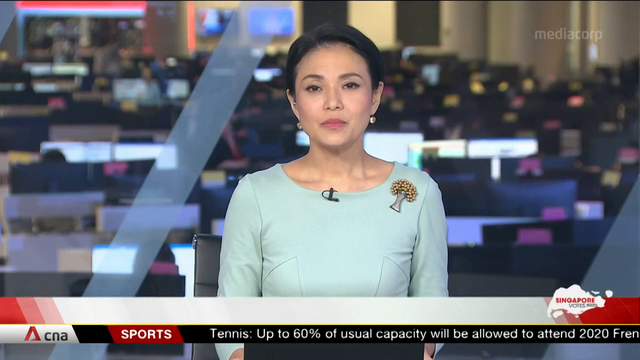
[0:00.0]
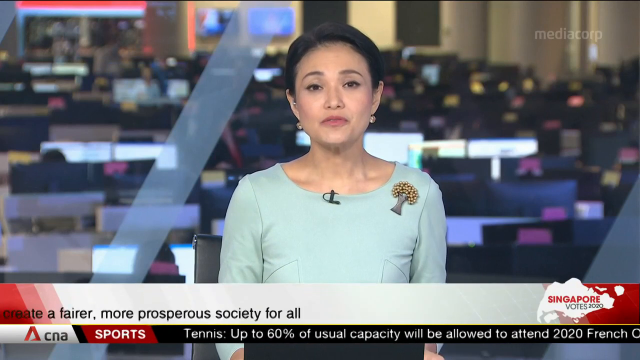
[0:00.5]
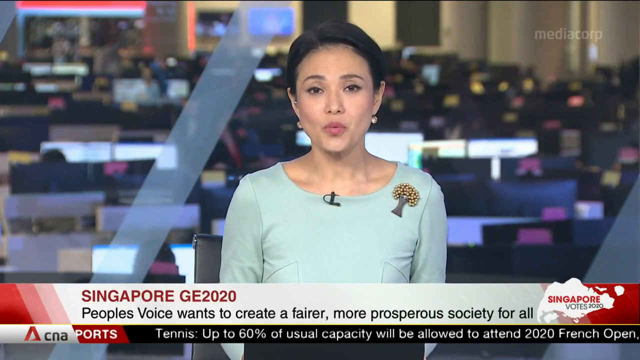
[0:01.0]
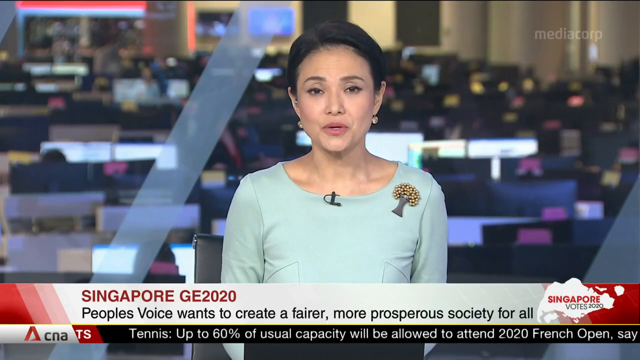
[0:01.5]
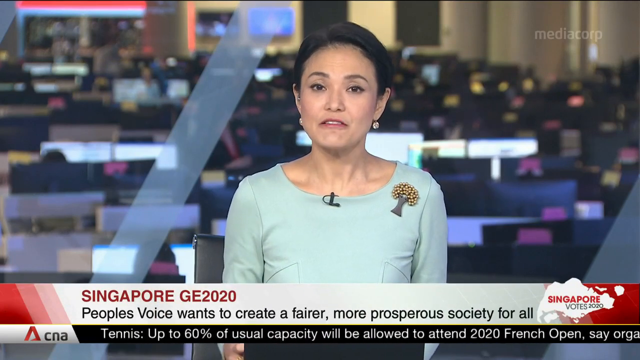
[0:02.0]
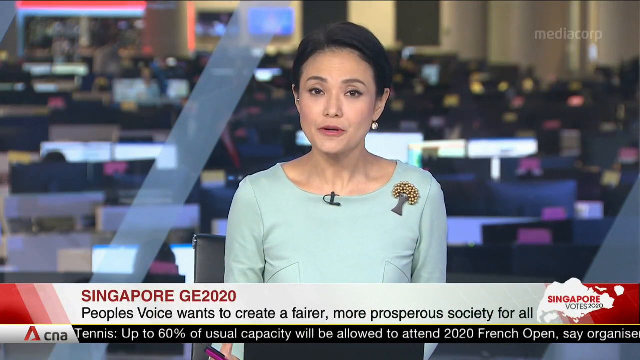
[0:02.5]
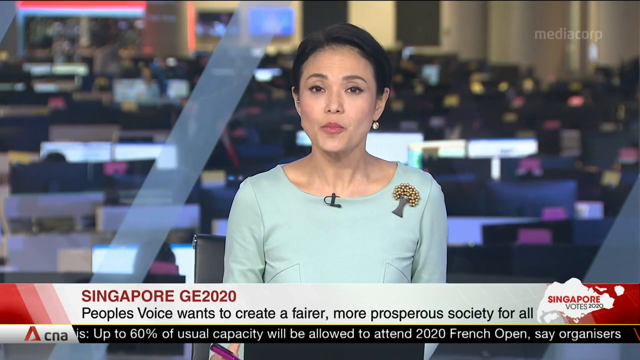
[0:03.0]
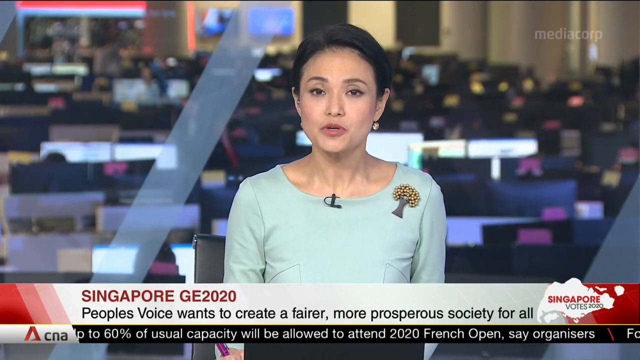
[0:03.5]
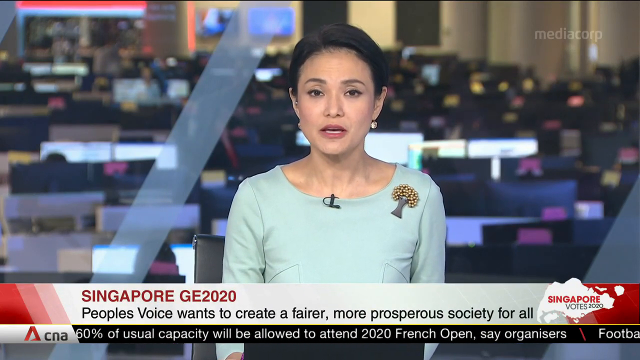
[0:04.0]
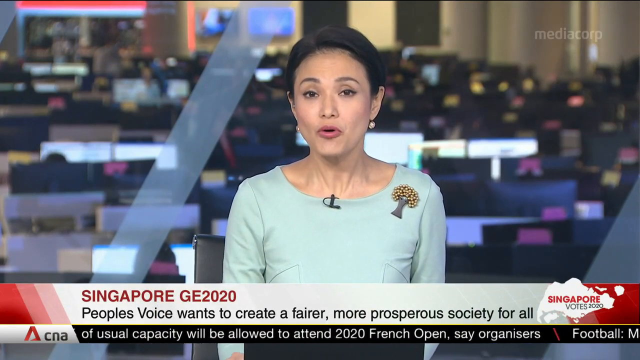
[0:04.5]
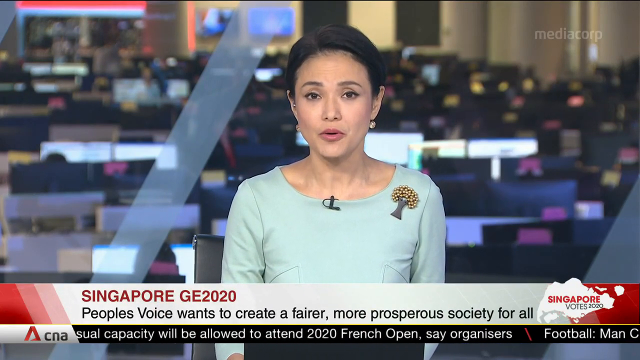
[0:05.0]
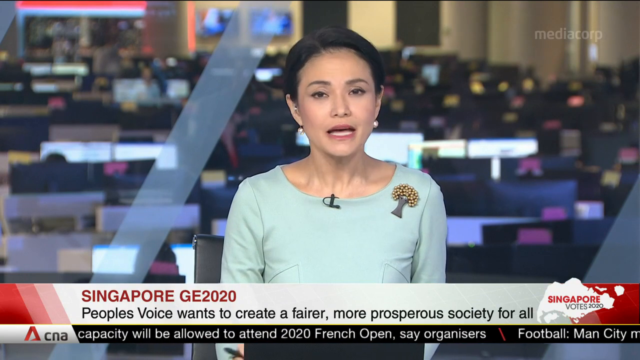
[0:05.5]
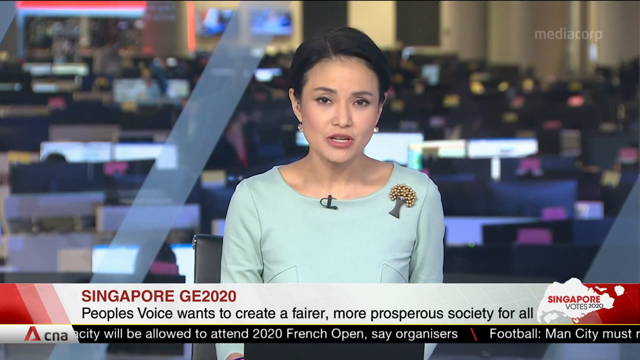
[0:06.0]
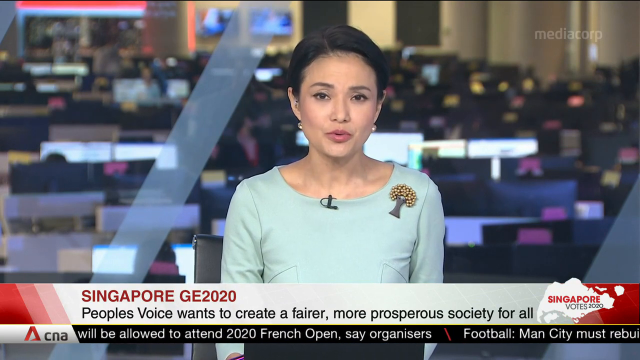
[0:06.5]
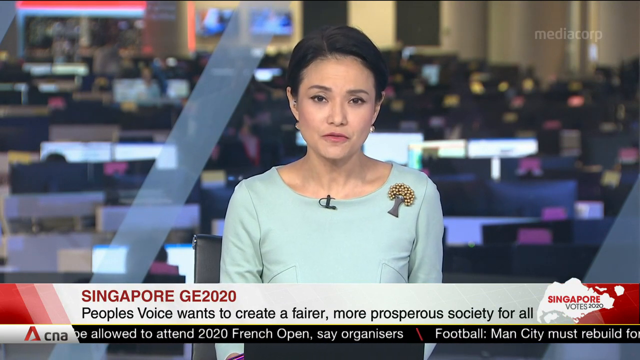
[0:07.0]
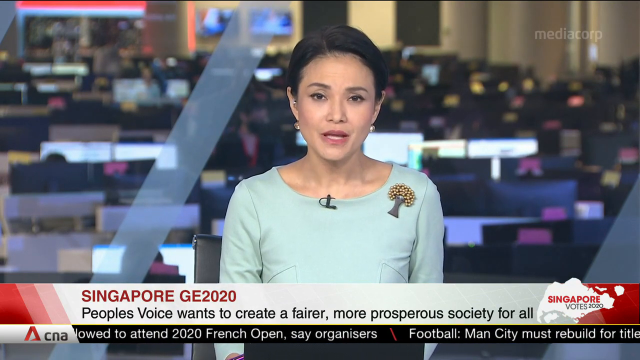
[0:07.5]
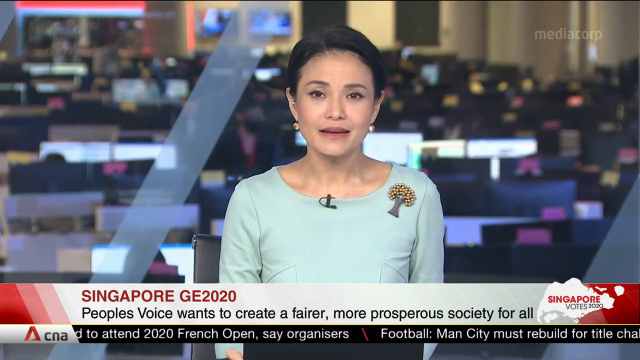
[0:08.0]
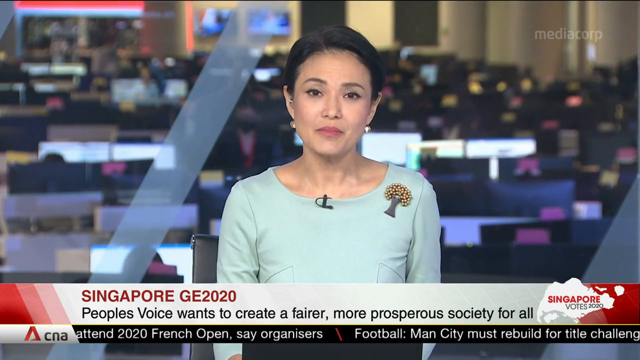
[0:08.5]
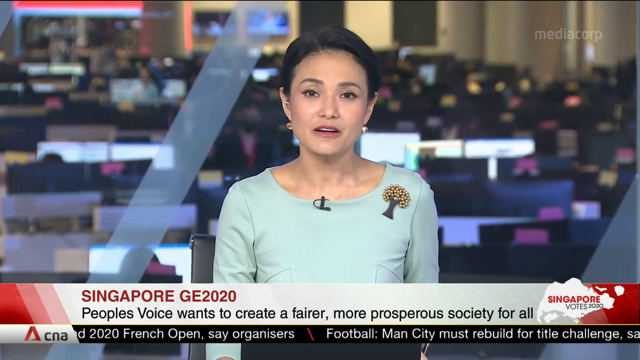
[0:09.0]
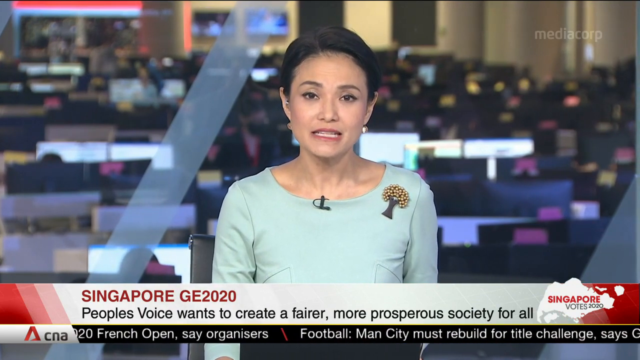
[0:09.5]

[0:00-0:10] Inside a newsroom filled with many computers, a news reporter or newscaster, a middle-aged woman with dark black hair, is in front of the computers. She is the only one in front of the camera, while different news personnel sit at the computers in her background; there are at least 50 computers behind her. She wears a pendant in the shape of a tree, a microphone clipped onto her mint-colored shirt, and pink lipstick, and she has dark brown eyebrows. The story seems to concern a discrepancy with the election, and it takes place in Singapore around election time in 2020.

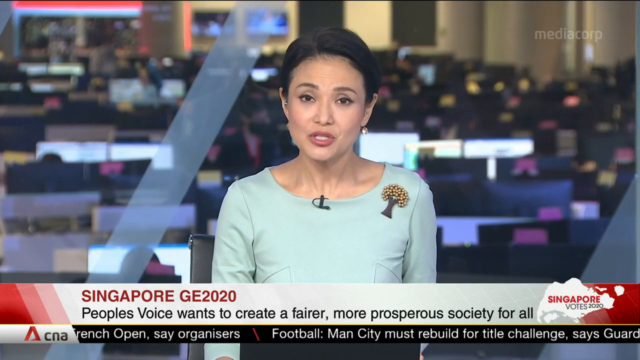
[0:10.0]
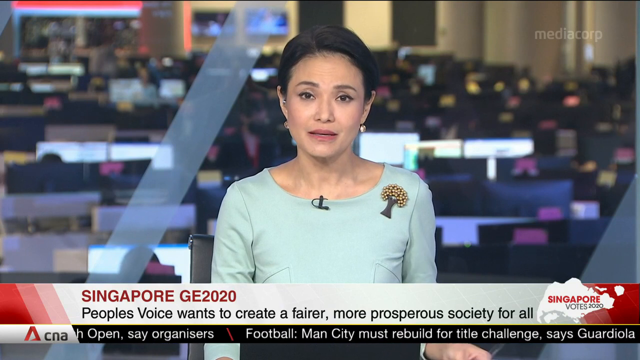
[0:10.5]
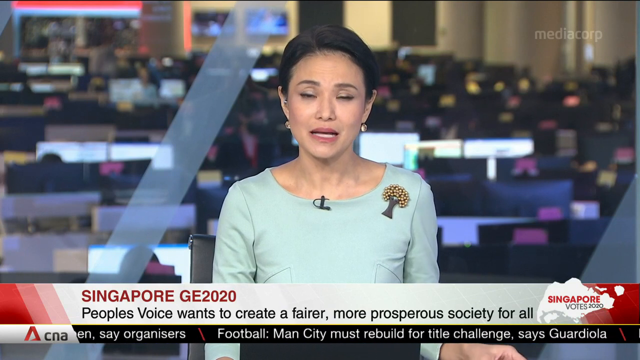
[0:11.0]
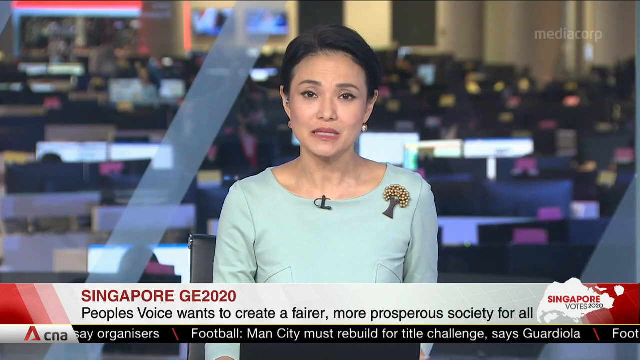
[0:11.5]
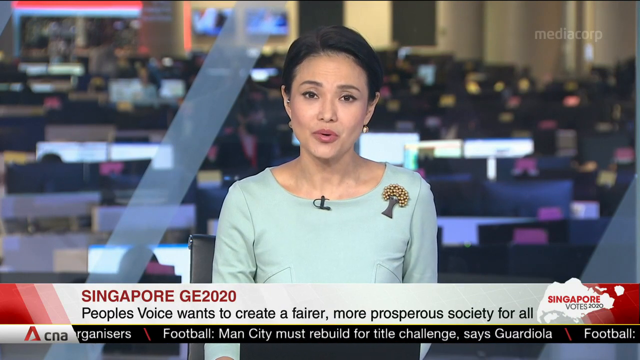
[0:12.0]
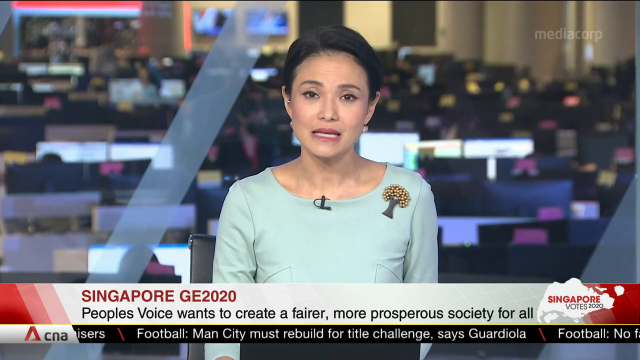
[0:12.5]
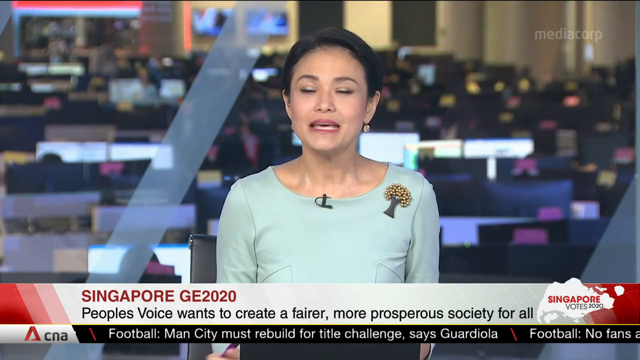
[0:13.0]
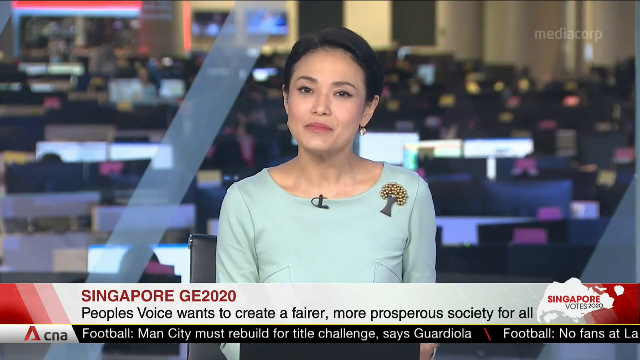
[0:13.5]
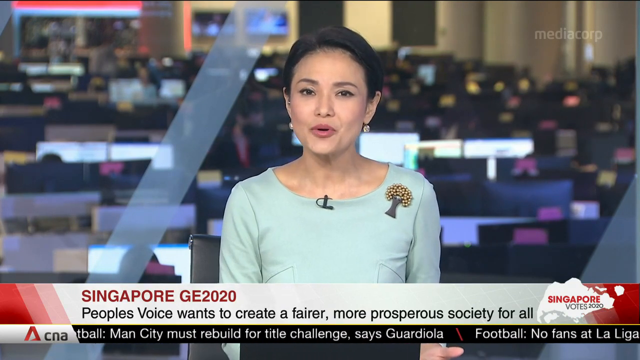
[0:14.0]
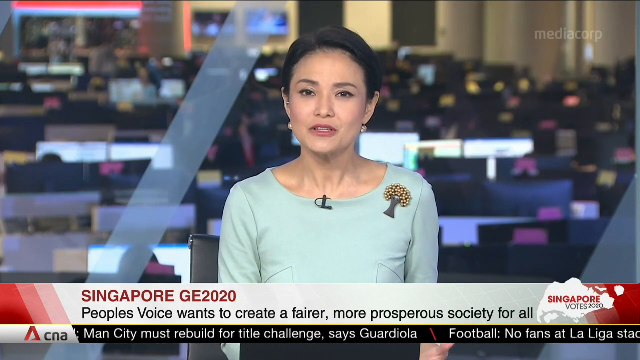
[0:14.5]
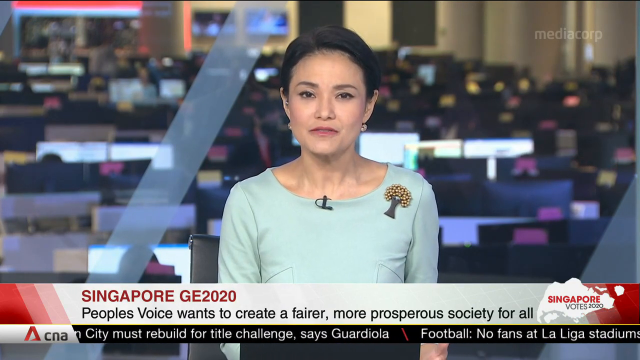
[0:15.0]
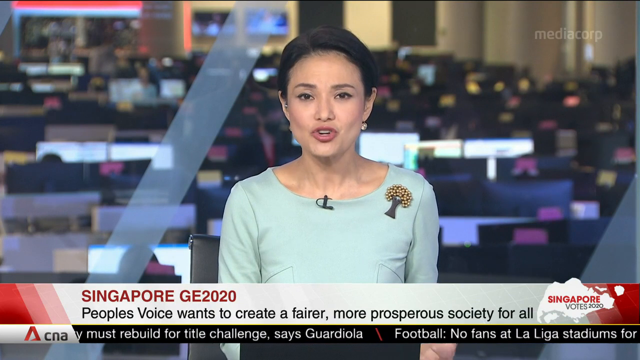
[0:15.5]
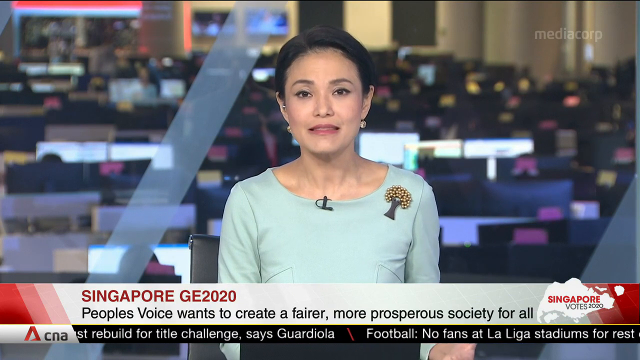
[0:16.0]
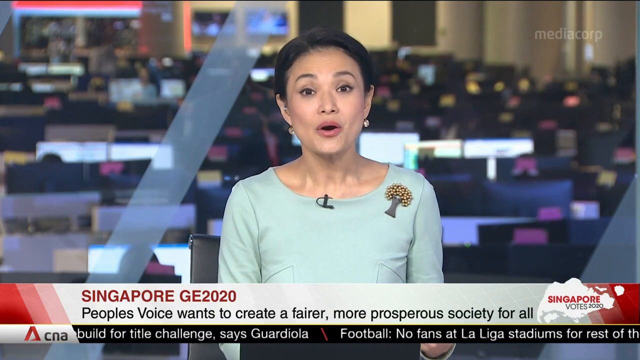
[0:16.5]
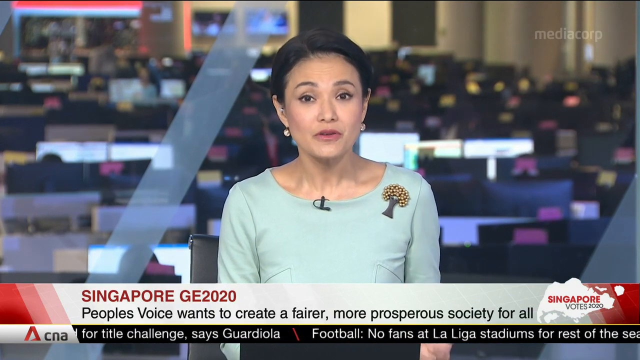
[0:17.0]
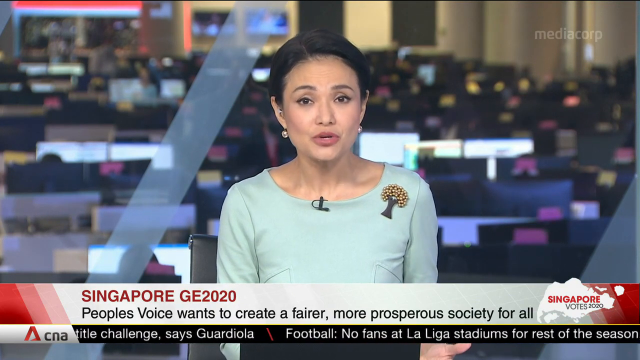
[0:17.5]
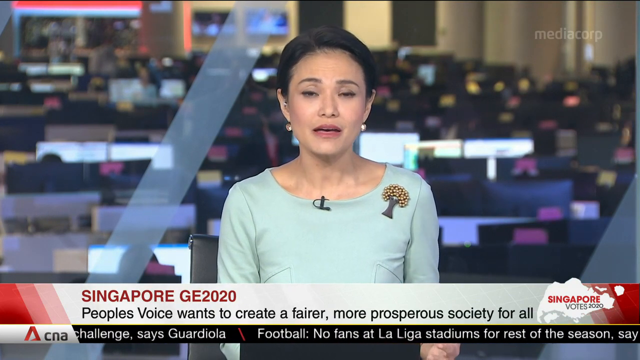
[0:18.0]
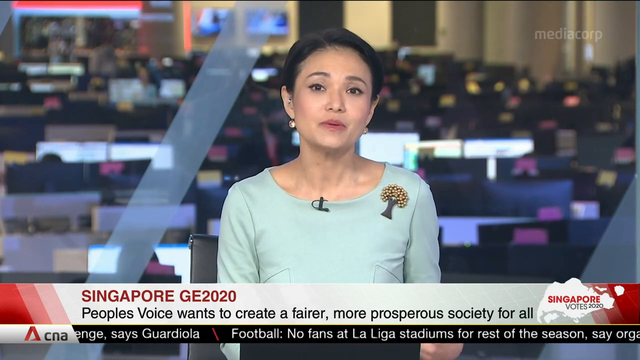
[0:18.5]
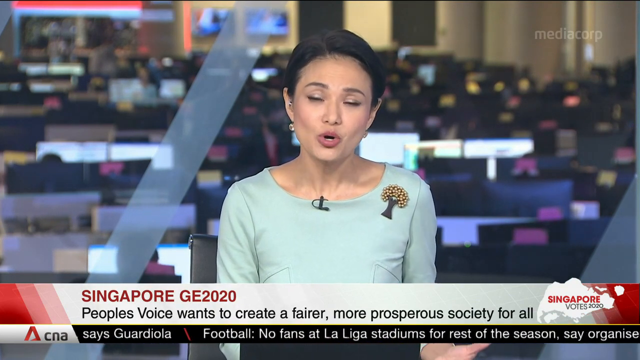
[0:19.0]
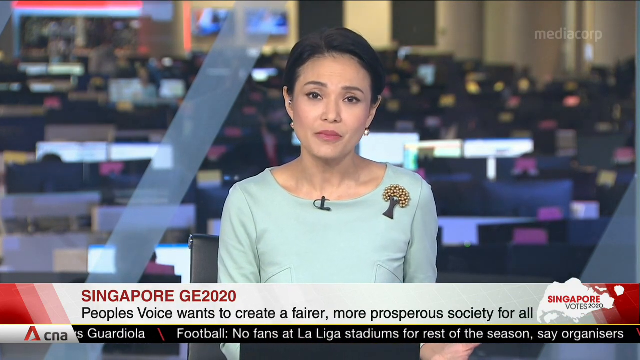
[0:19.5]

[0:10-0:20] The news reporter or newscaster is in front of the camera, sitting in a black chair. She has black hair, pale skin, pink lipstick and dark brown eyebrows, and wears a mint colored shirt with a black microphone clipped to it and a pendant in the shape of a tree. In her background there appear to be no fewer than 50 computers being used by different newsroom personnel. A TV in the background is flashing, and a person standing up indirectly behind her is talking amongst the newsroom personnel.